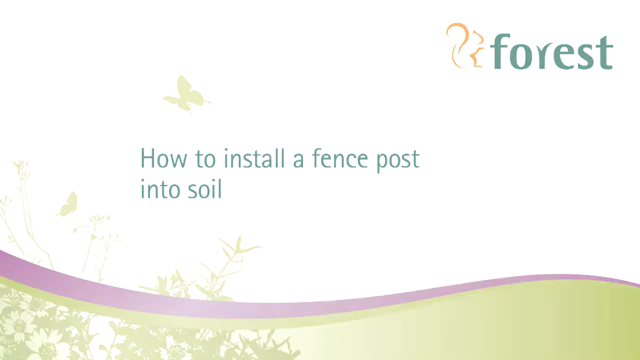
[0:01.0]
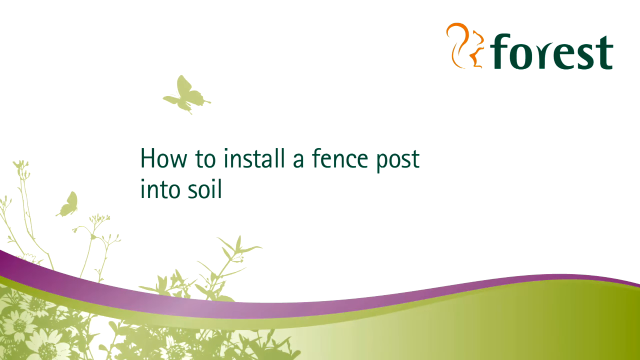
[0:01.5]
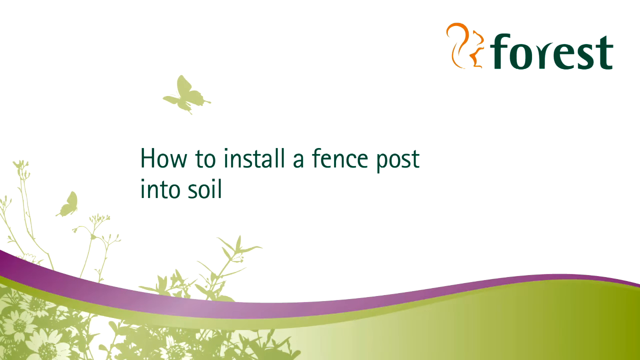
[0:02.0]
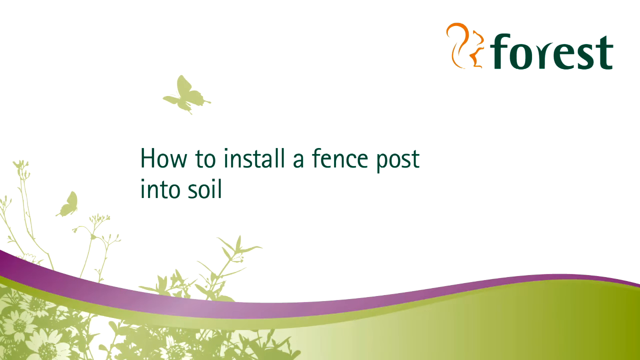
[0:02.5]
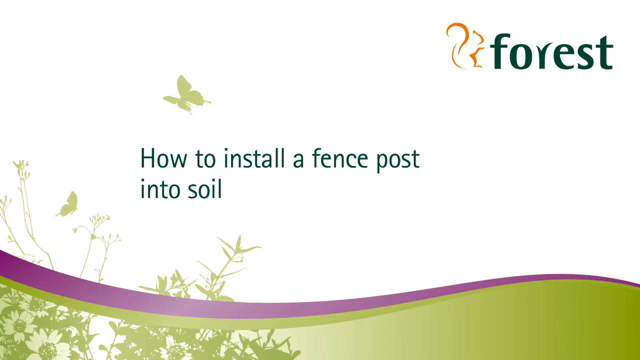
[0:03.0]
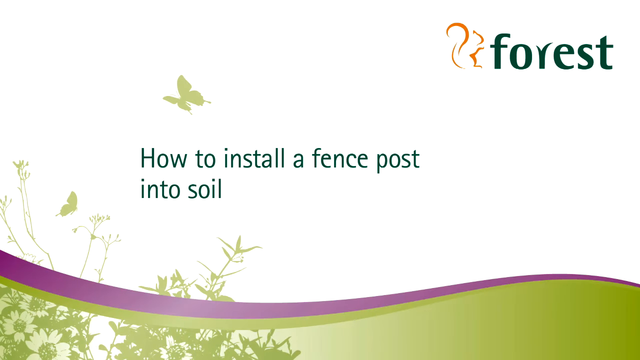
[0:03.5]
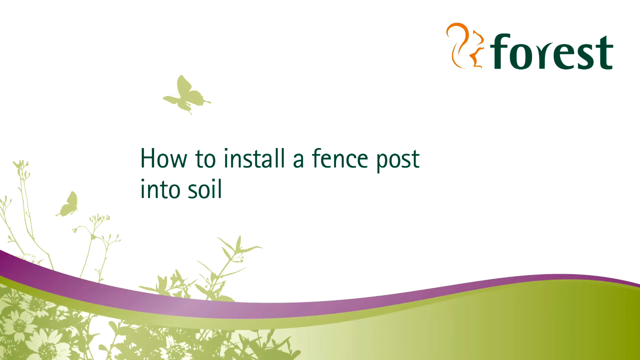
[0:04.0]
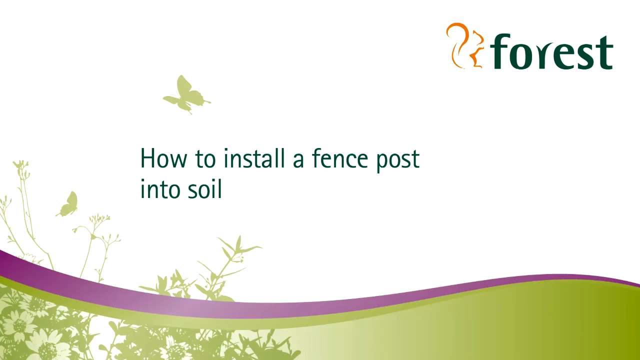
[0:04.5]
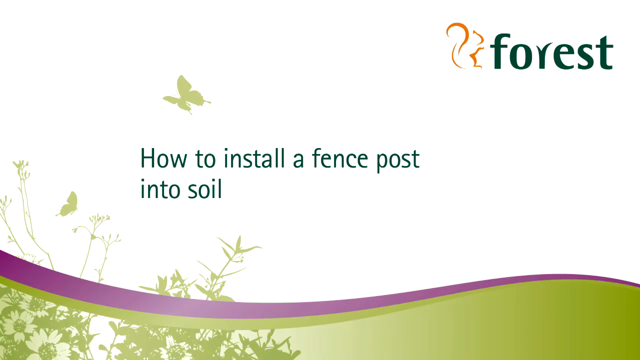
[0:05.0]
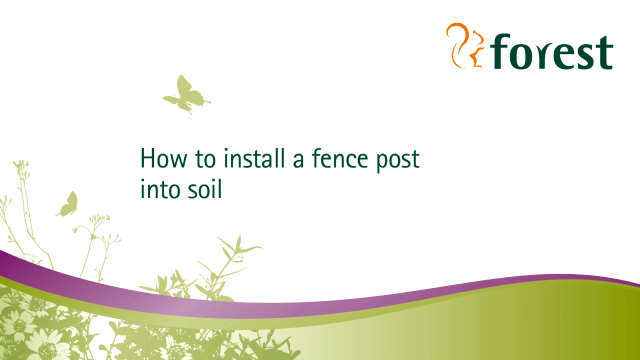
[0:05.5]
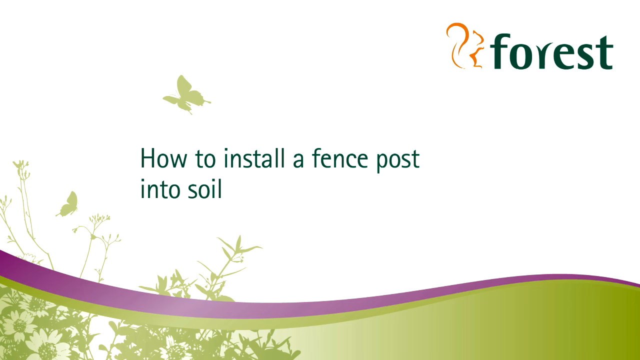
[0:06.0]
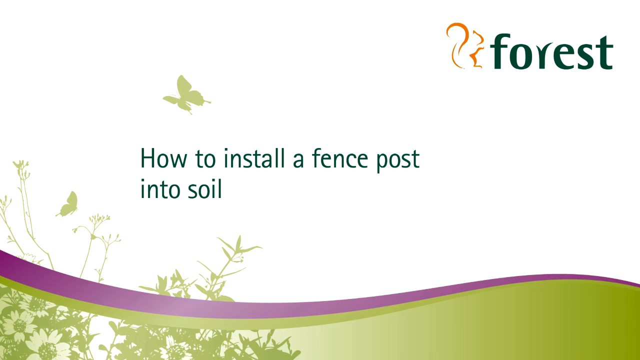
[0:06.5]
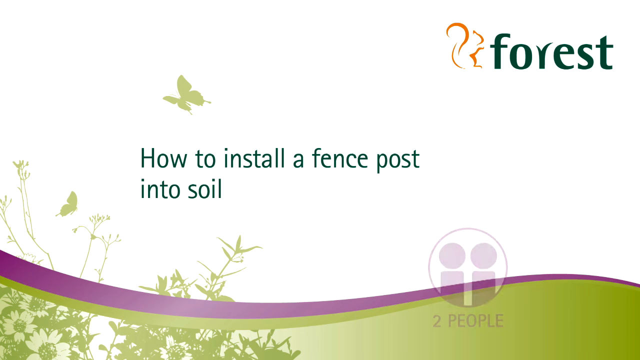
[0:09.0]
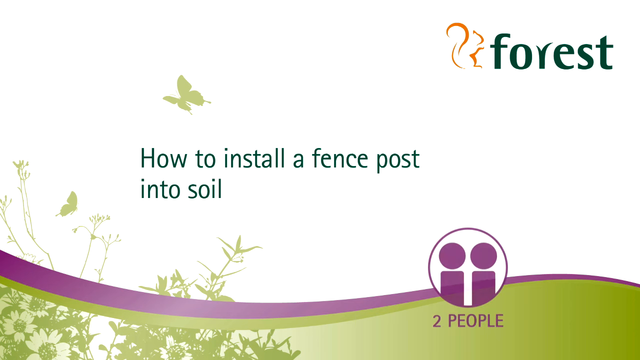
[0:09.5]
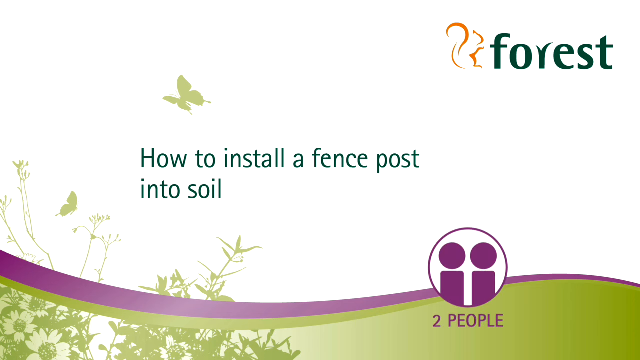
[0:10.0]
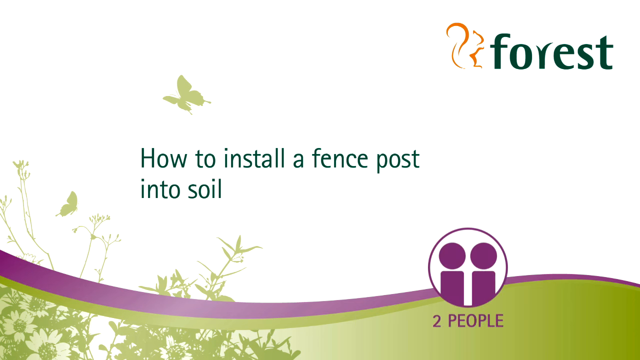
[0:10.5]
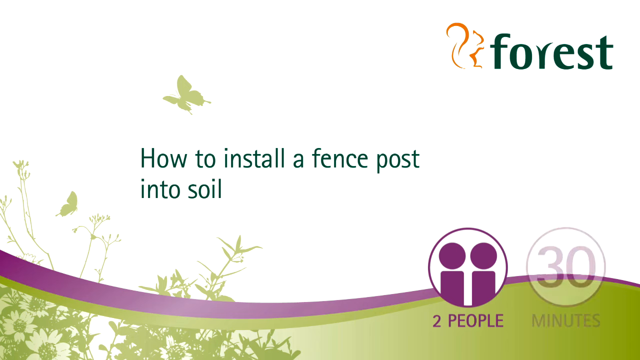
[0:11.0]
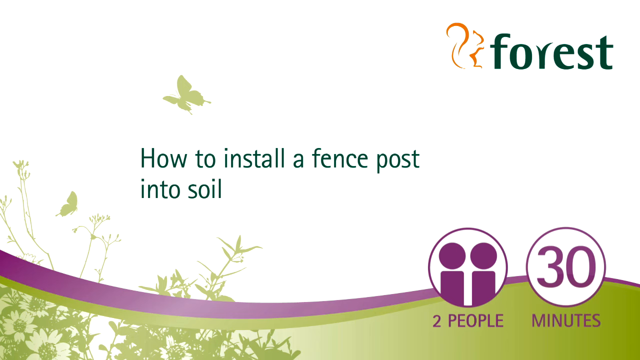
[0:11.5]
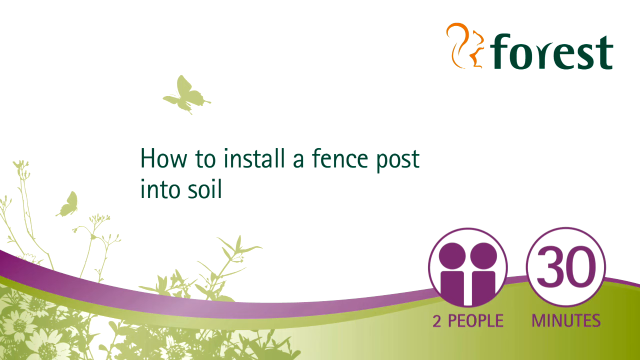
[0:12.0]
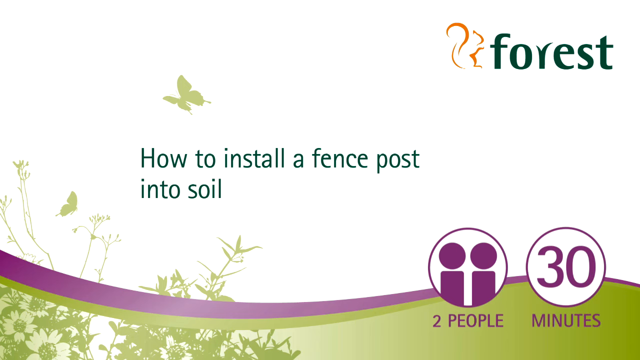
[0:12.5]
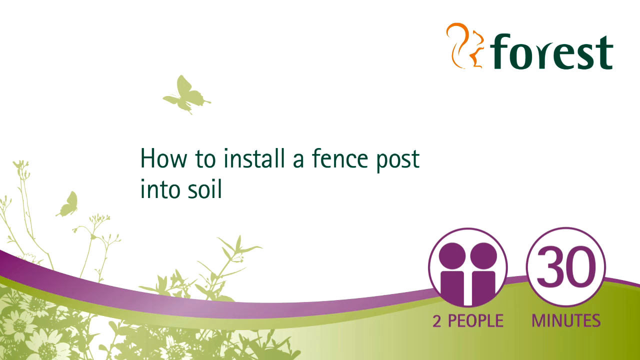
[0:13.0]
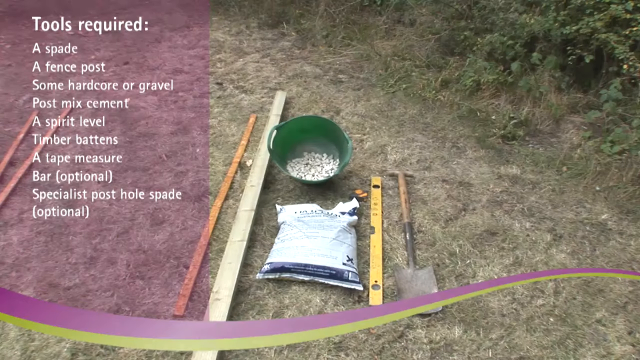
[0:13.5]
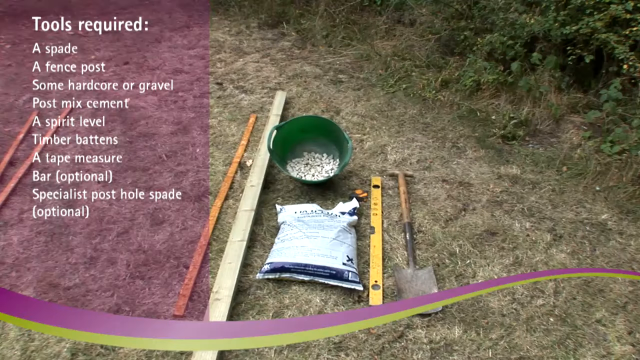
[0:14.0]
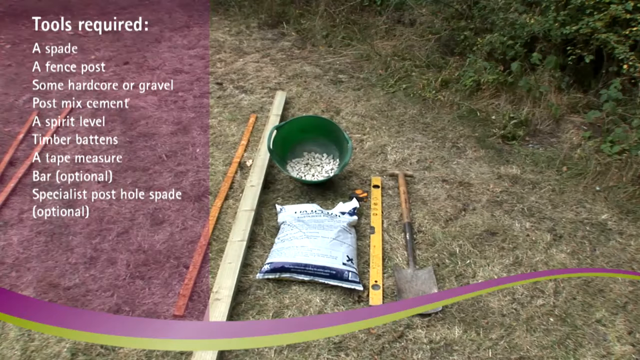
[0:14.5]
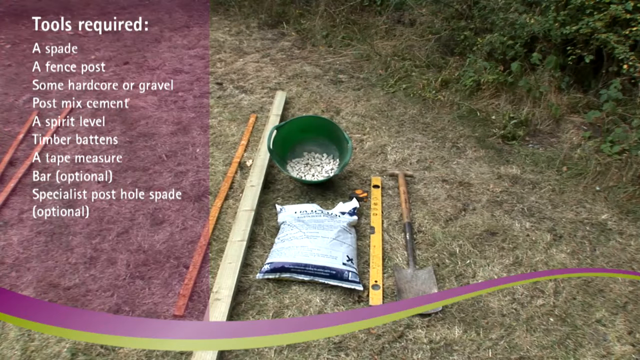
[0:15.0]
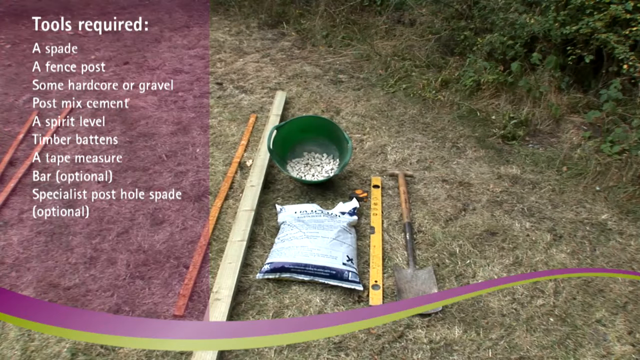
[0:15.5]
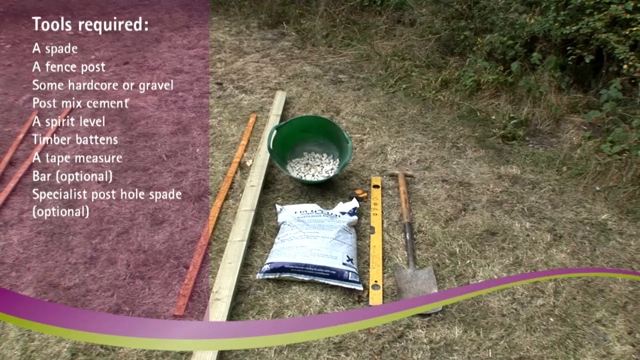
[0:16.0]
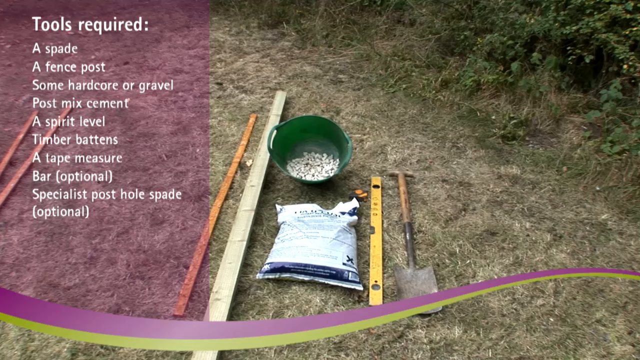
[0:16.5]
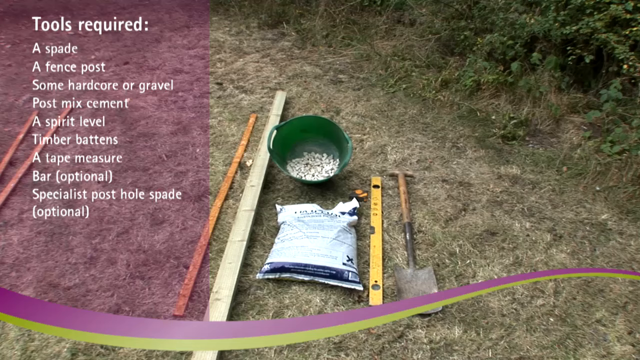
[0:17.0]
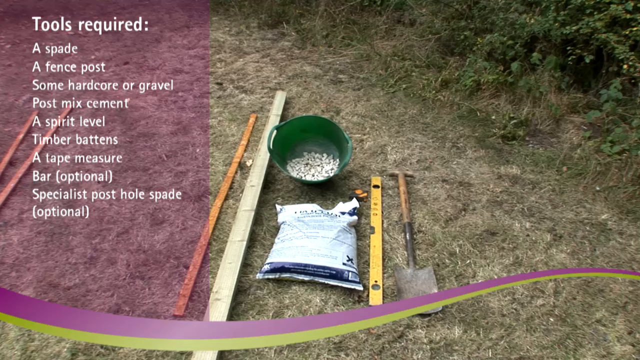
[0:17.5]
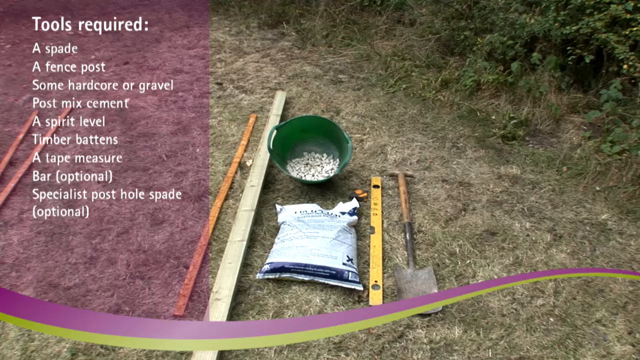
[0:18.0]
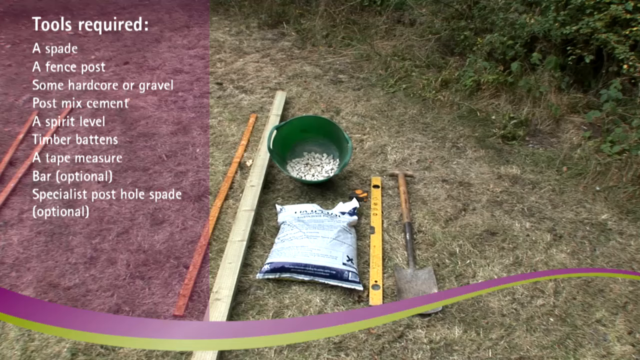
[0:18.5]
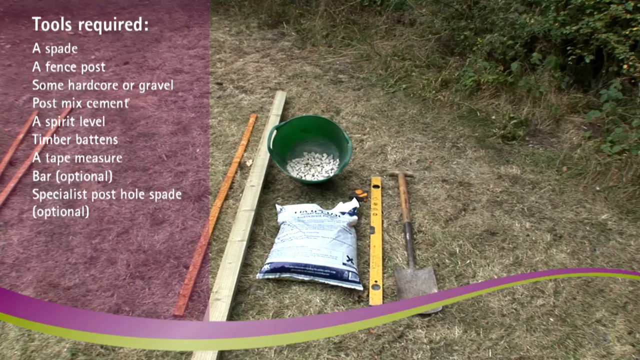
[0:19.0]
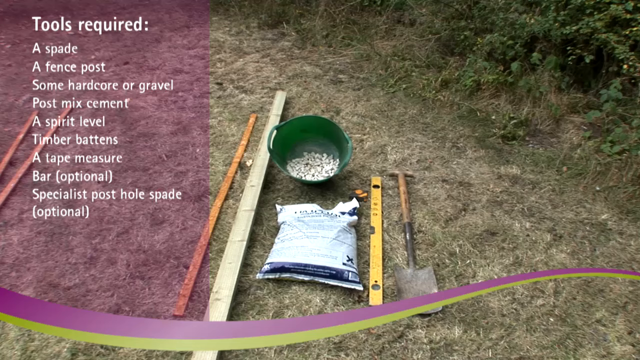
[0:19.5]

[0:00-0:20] The video is labeled "how to install a fence post into soil," and at the very beginning the word "forest" appears in green in the top right corner, apparently the name of the company making the video. A green bottom screen with a purple stripe appears, listing the items needed to make a hole for a fence post: "a fence post," "some hardcore or gravel," "post mix," "a spirit level," "a tape measure," and a special post hole spade marked optional. A picture of the ground where the hole will be follows; on the ground are a green bucket, a yellow tape measure, a piece of wood, a bag of something that looks like potting soil, a spade and a couple of pieces of wood.